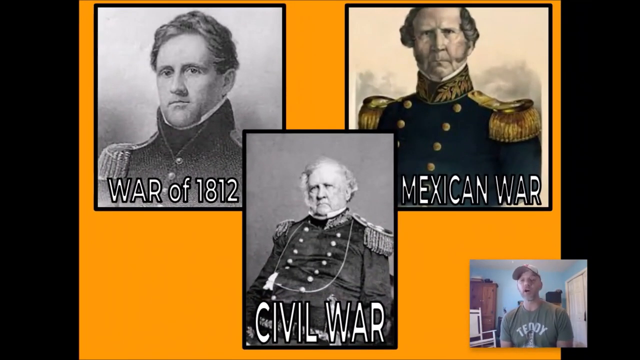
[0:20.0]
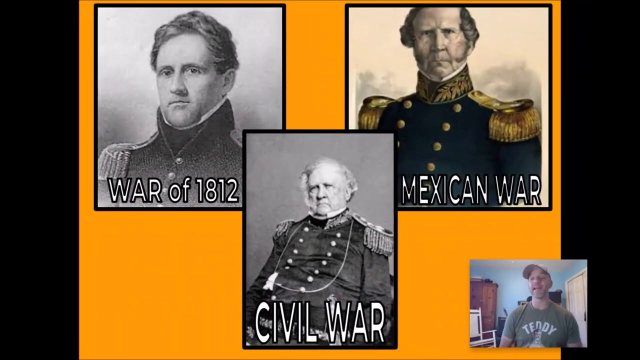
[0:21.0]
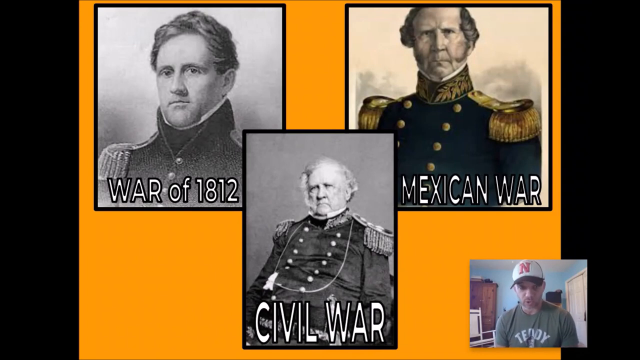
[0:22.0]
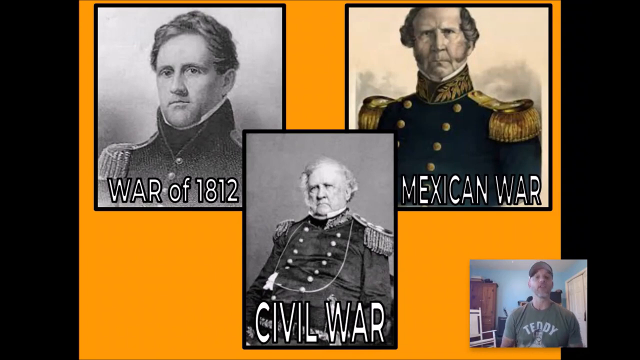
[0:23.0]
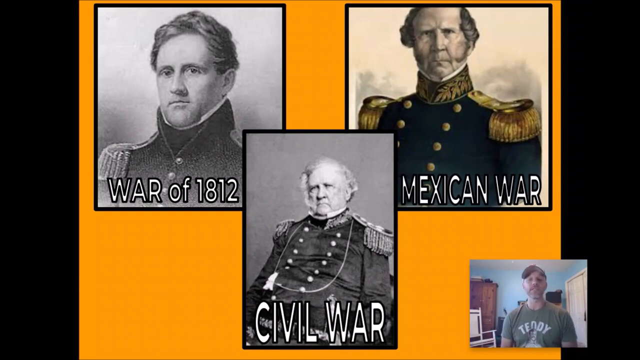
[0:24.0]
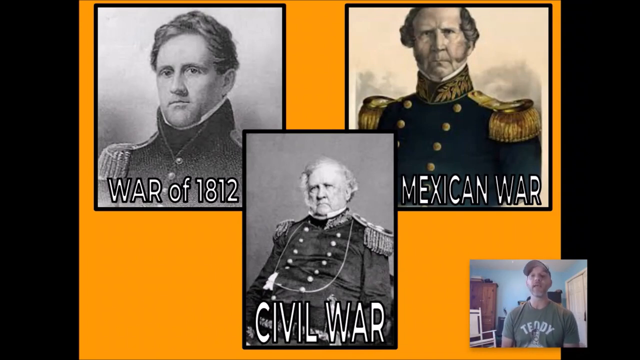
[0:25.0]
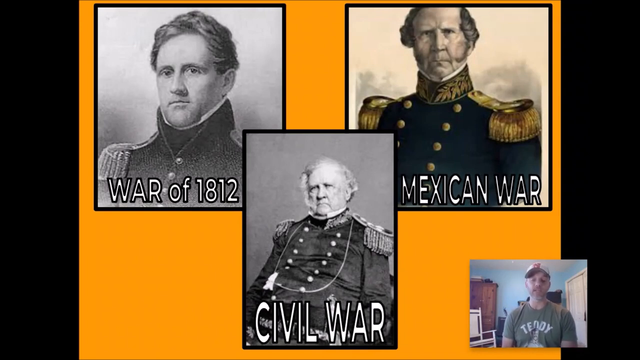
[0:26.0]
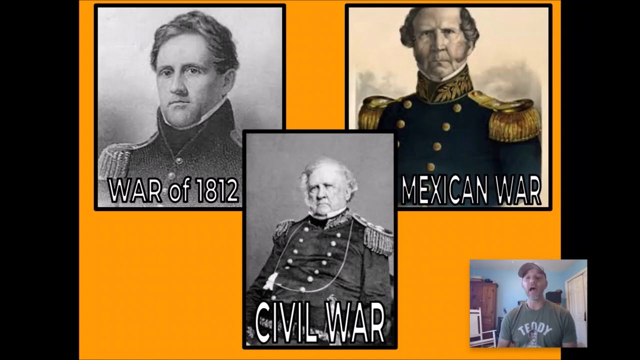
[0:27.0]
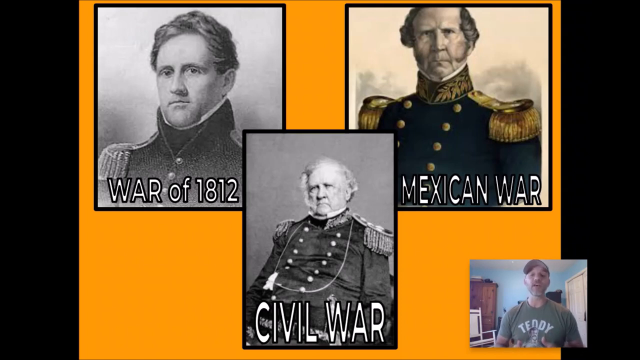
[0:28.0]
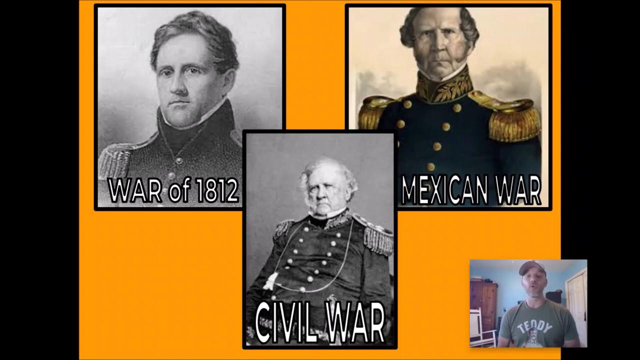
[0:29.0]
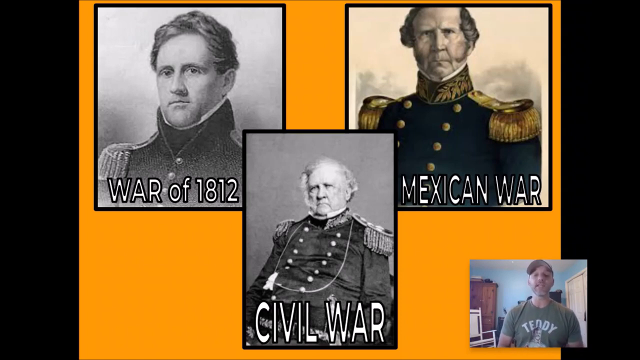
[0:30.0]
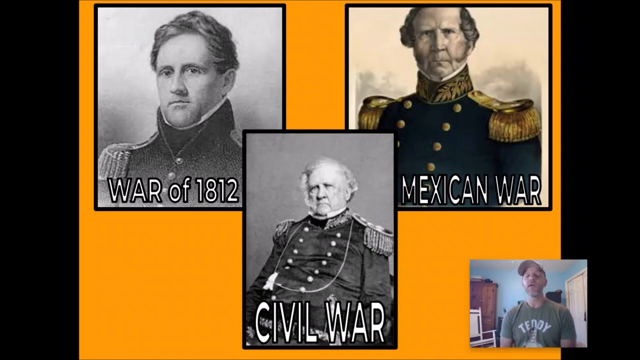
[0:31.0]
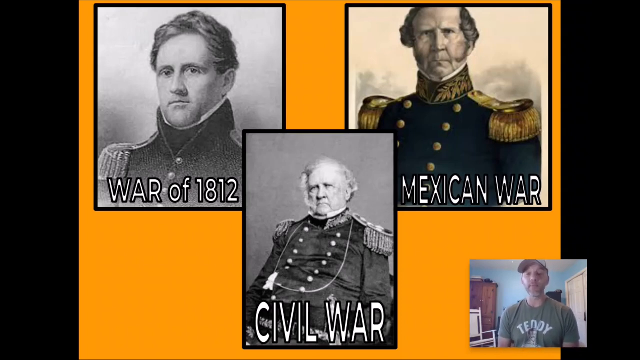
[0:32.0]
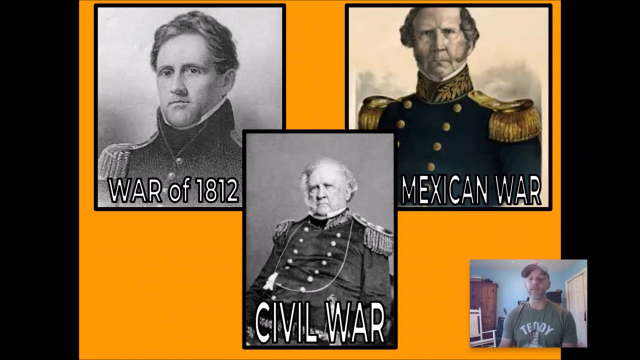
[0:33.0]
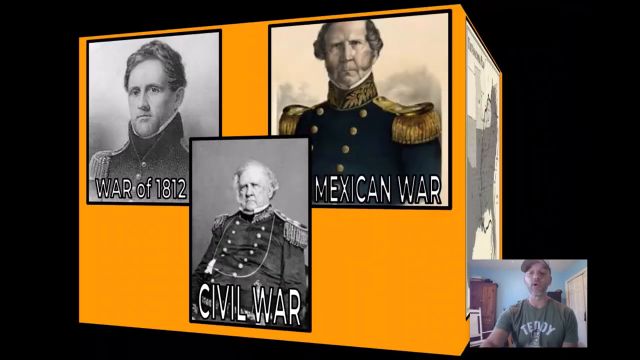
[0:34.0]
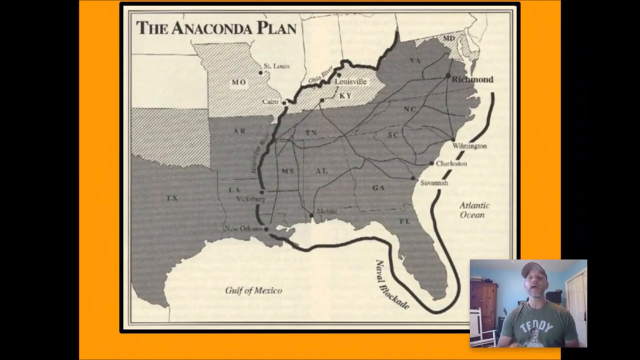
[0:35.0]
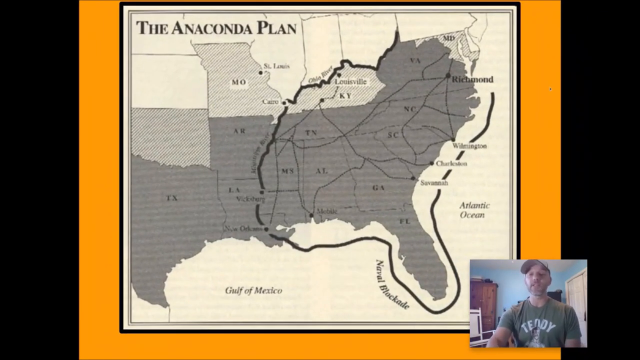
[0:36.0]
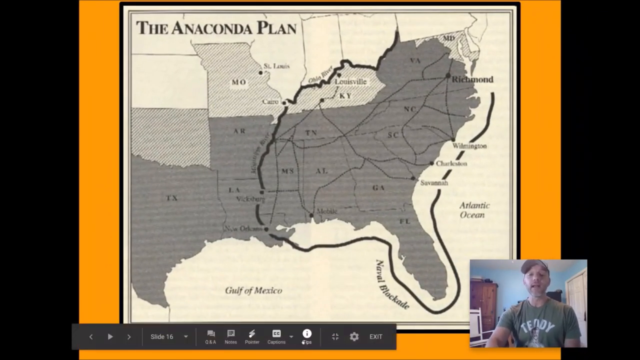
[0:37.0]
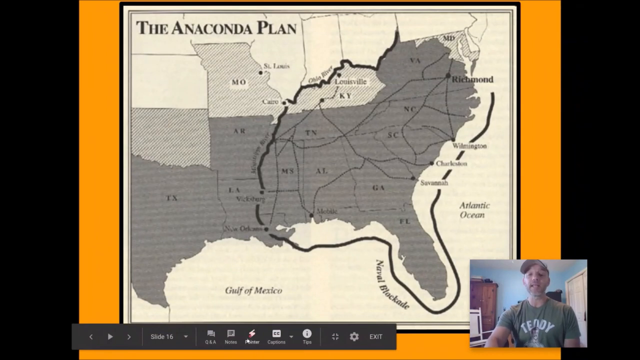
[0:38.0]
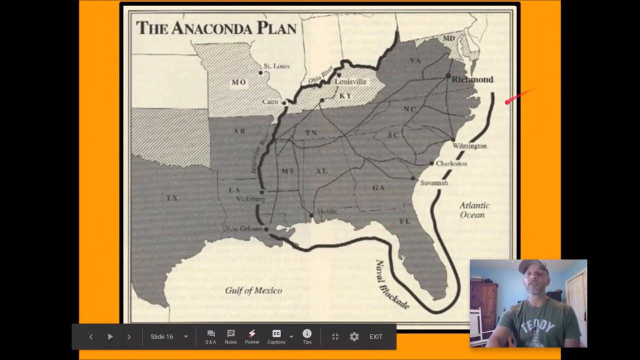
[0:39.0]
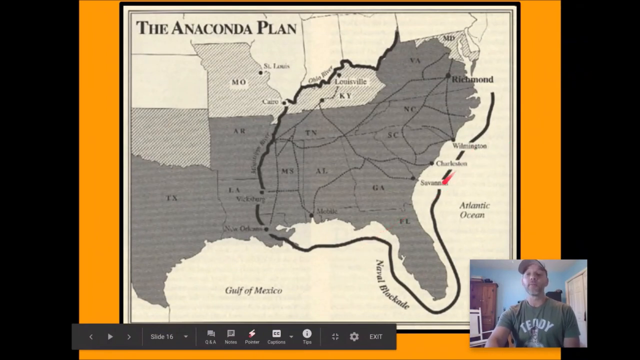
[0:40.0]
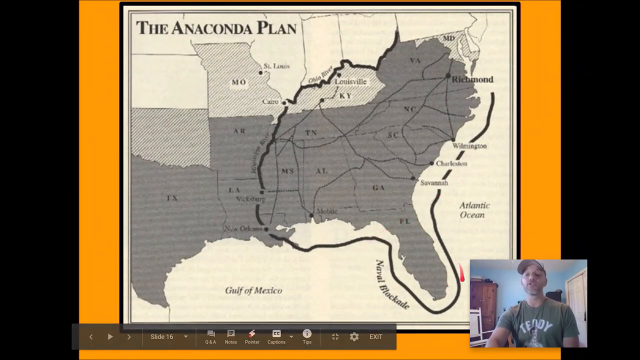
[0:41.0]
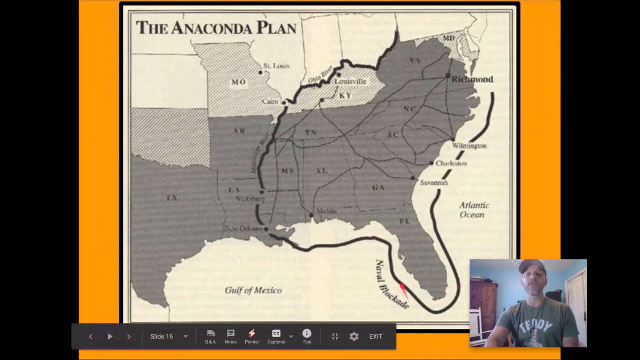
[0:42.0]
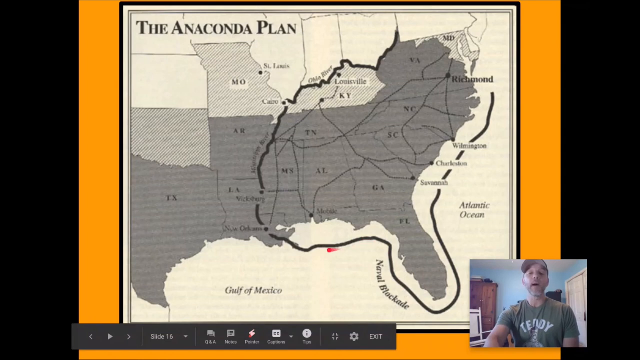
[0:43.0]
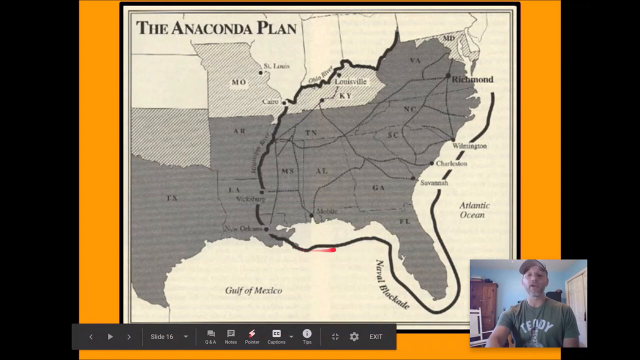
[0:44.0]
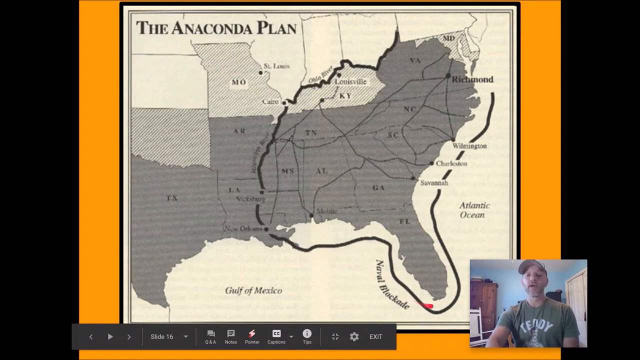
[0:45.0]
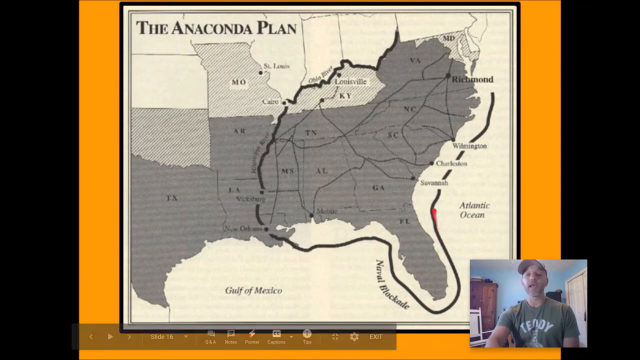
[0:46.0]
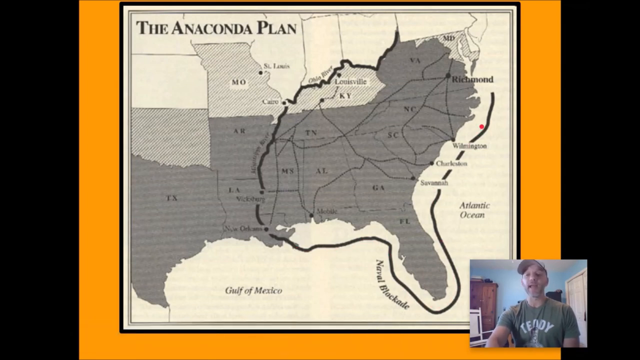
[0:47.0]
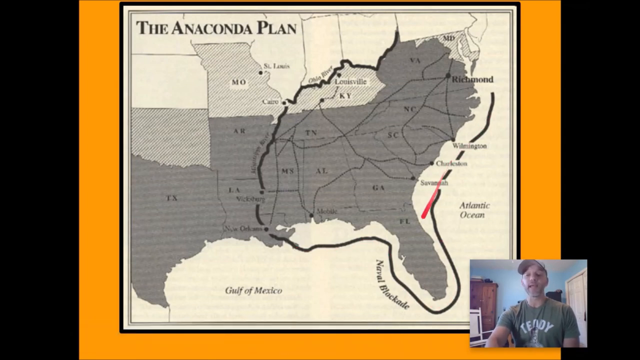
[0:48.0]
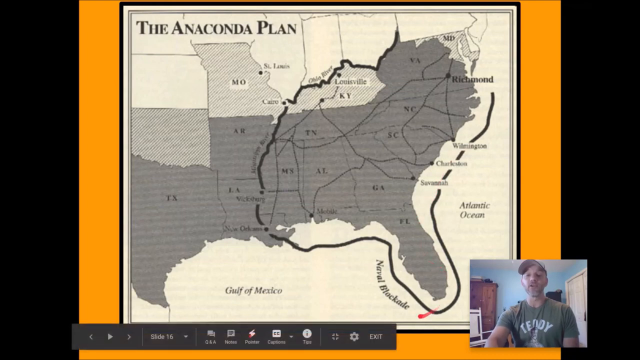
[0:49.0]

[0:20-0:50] The three pictures with soldiers on them, labeled "War of 1812", "Civil War" and "Mexican War", remain on screen. The man in the lower right keeps speaking into the camera and making hand gestures. He wears a gray shirt with the word "Teddy" on it in white font and a gray hat. The video then transitions to a map of the United States focused more on the eastern front. In the upper left-hand corner it says "the Anaconda Plan", and a couple of states are circled on the map. A small red circle comes in from the right side of the screen and traces the line around the states, which is highlighted in black. Some of the states on the map are labeled in dark and light gray.